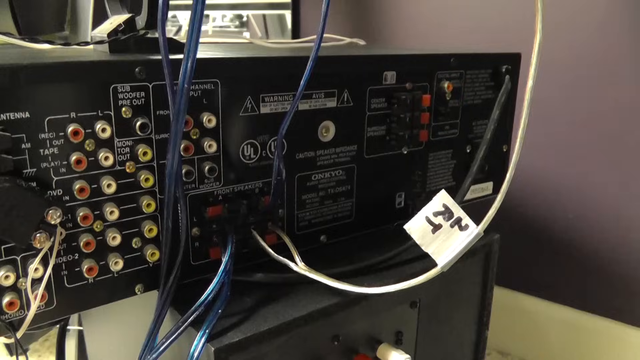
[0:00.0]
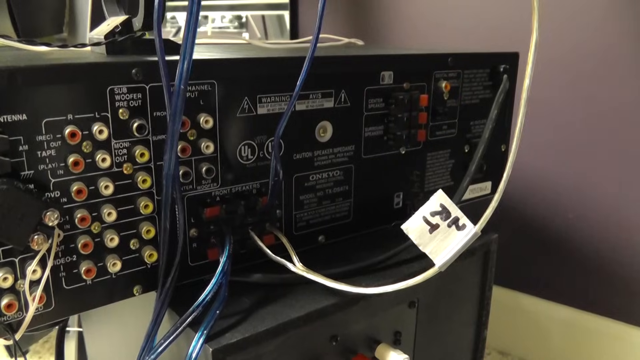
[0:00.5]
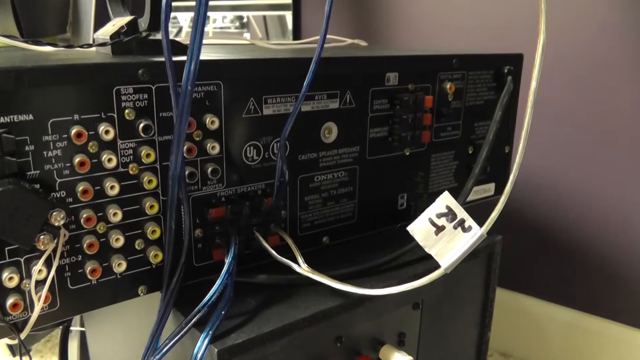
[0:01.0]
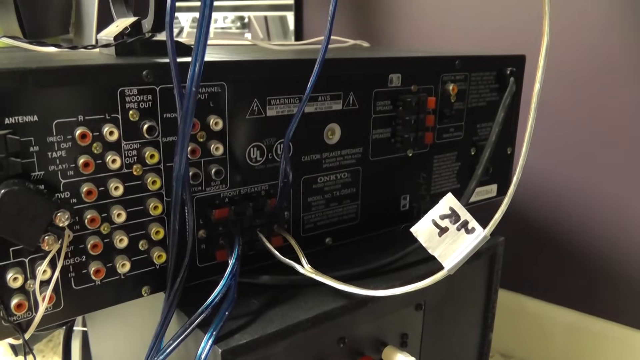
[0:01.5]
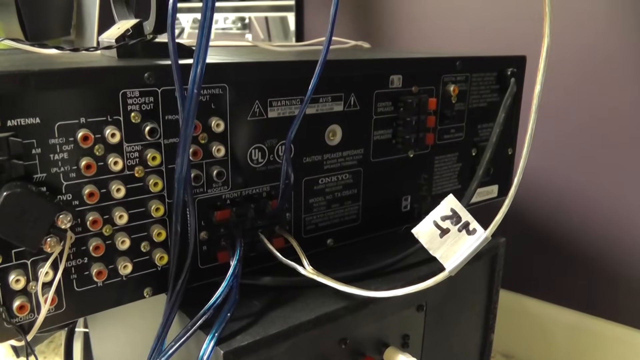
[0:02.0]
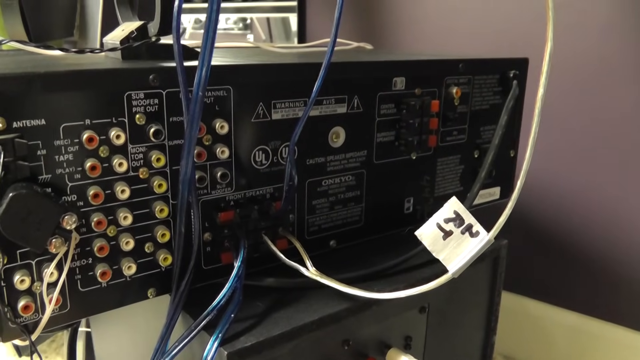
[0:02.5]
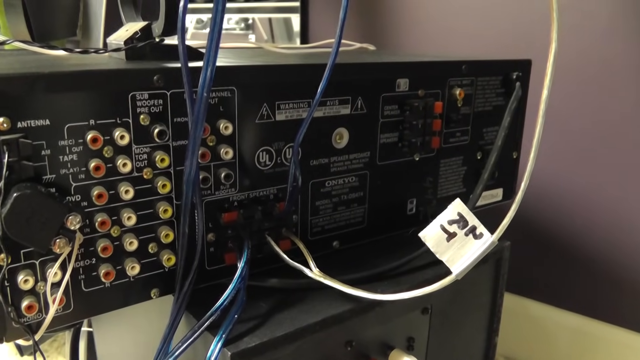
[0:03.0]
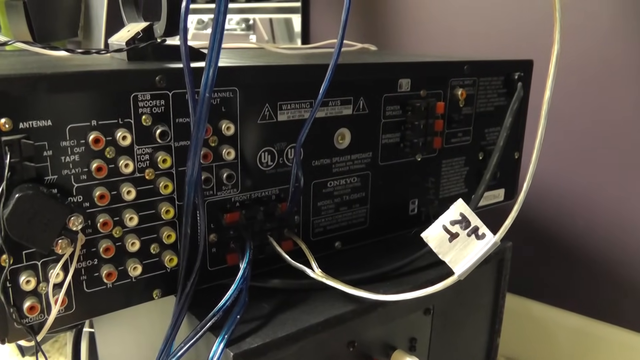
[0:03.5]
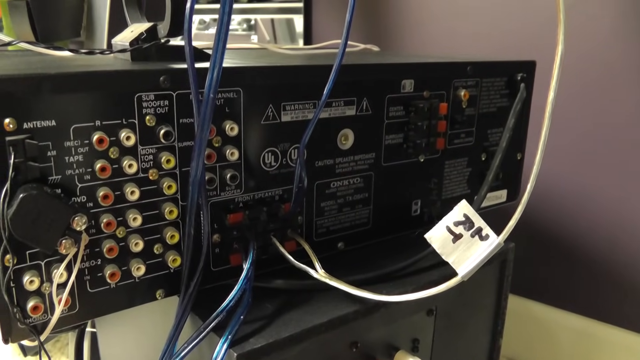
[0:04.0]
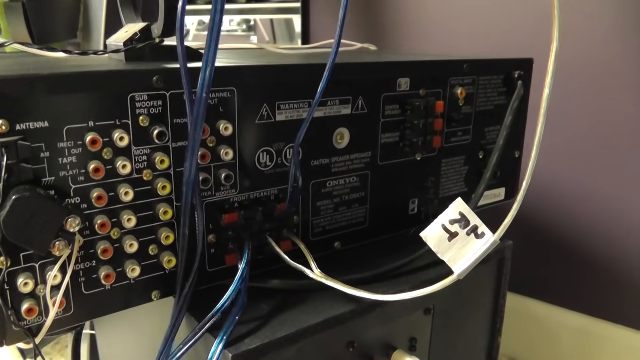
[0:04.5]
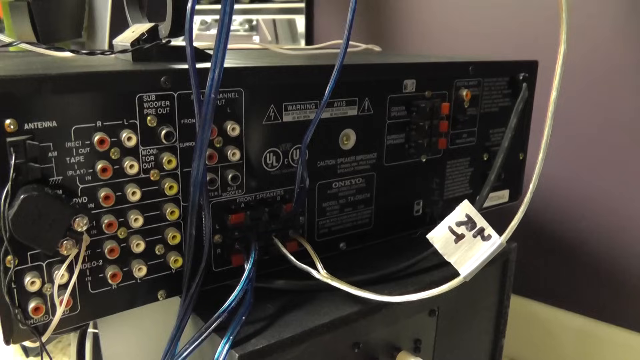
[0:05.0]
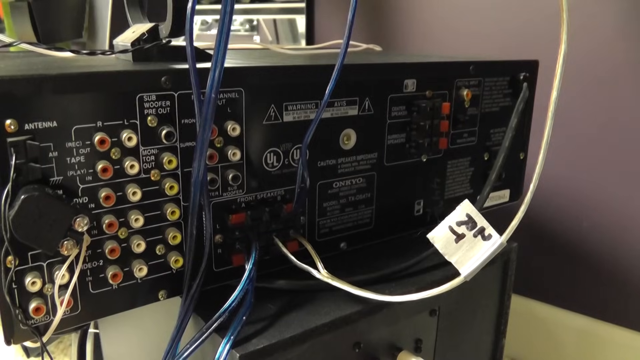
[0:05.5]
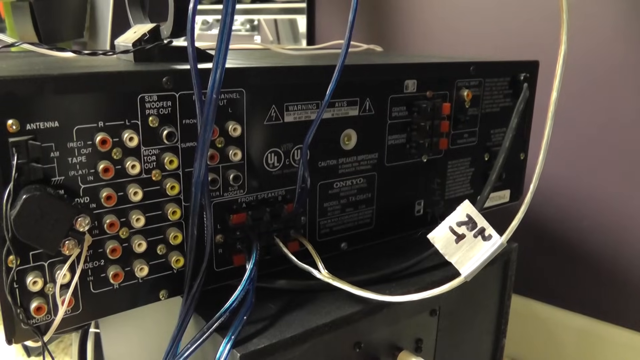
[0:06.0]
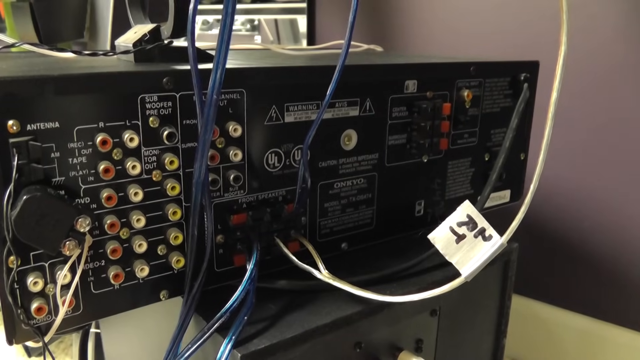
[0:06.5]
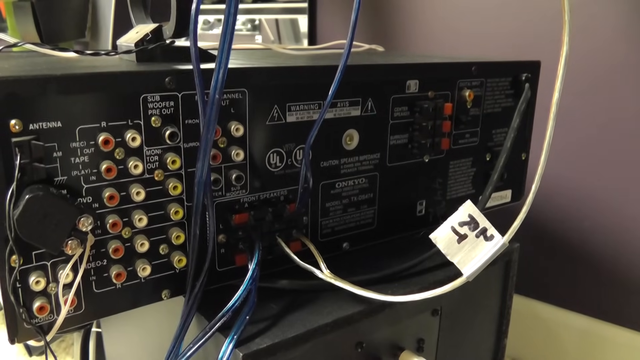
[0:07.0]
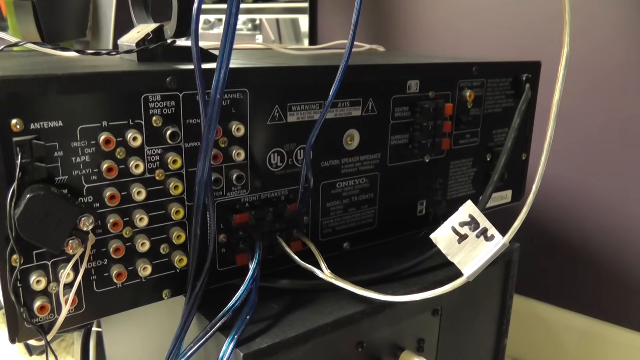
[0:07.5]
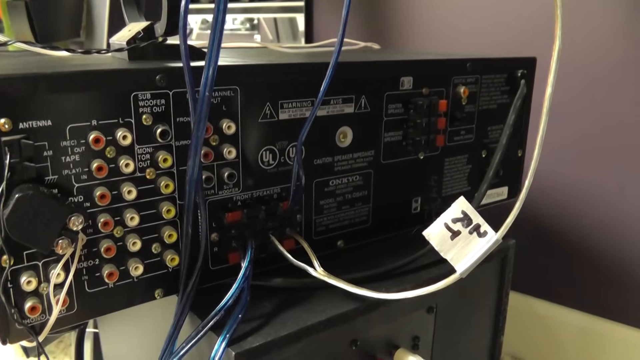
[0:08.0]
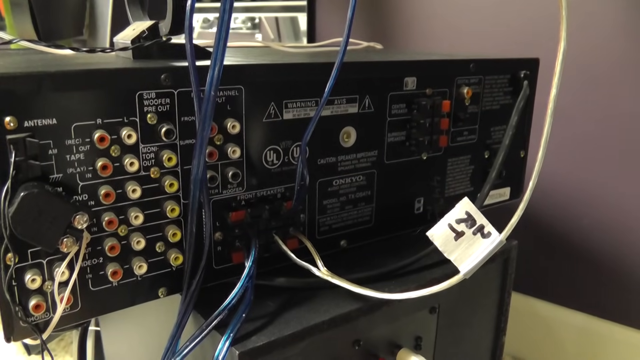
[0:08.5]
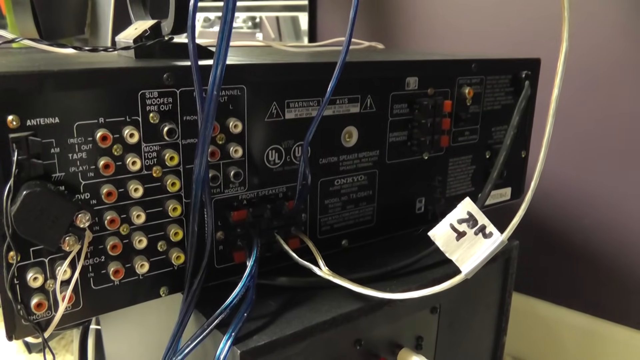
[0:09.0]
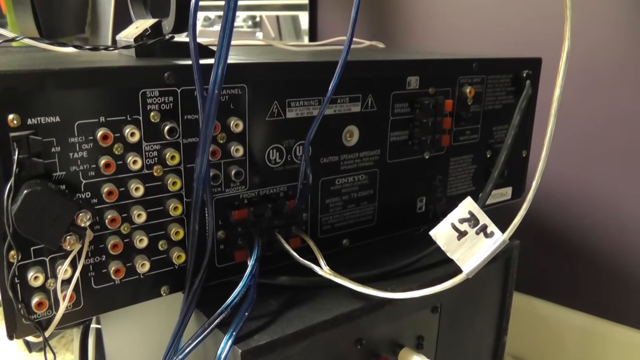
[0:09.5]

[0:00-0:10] A radio monitor or some type of monitor device that equipment plugs into is shown. It takes the old type of wiring with red, white and yellow, and has three rows of those colors for plugging cables in. The box is rectangular and runs from the left to the right at an angle. About one-fourth of the space, on the right side, is the wall, a mauve-ish gray that is lighter at the top and darker at the bottom. Six rows of red plug-ins run down the left side of the console, six rows of white are in the middle, and there are five rows of yellow. The very top plug-in on the yellow side is solid silver with no coloring. The console is black, with multiple writing indicating where things plug in. Multiple cords come down, including a single white cord coming from the top right and plugged into the console, split into two pieces at the bottom. Someone has put a piece of white tape on the white cord and written the letters N, R and T on it. In the top right corner of the console is the plug-in that plugs into the wall for electricity; it comes down and is a little dirty, with dust visible on it.